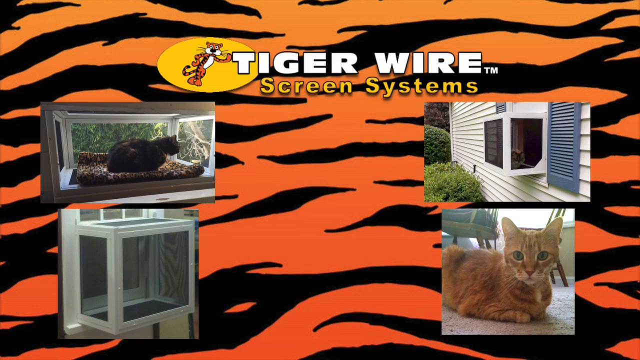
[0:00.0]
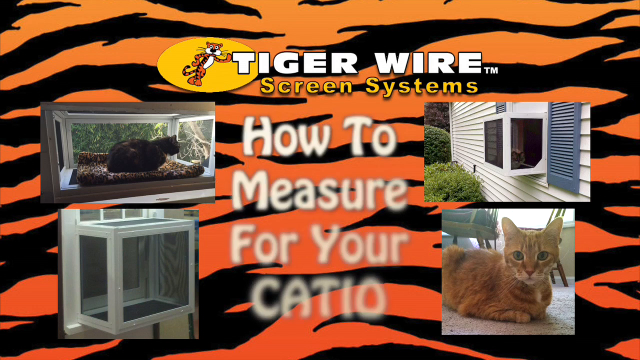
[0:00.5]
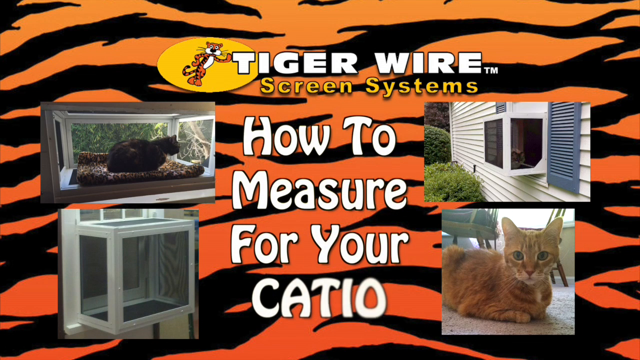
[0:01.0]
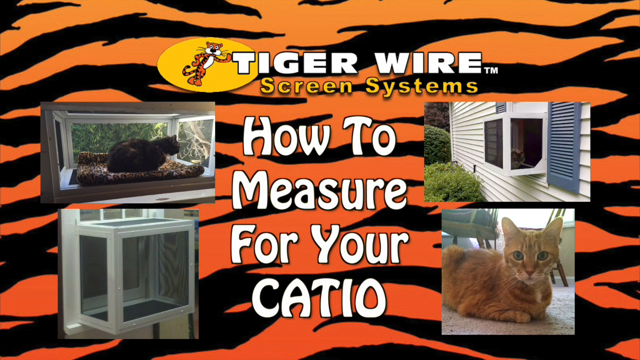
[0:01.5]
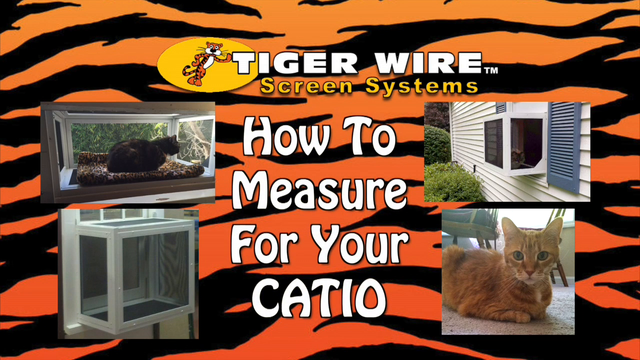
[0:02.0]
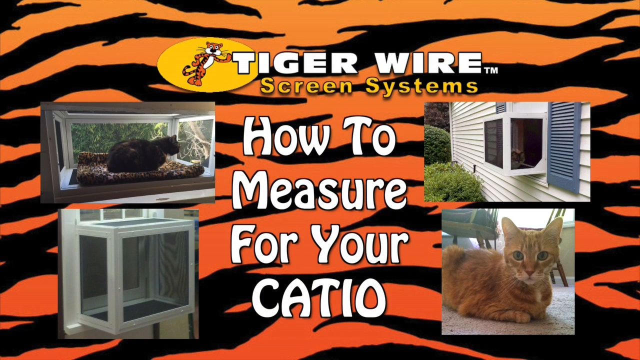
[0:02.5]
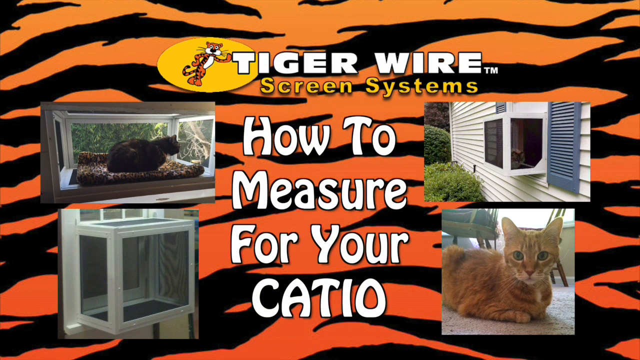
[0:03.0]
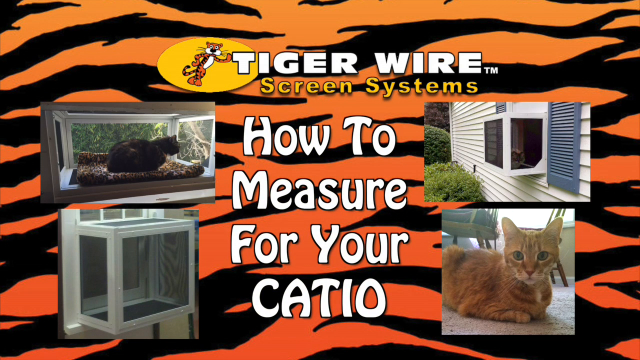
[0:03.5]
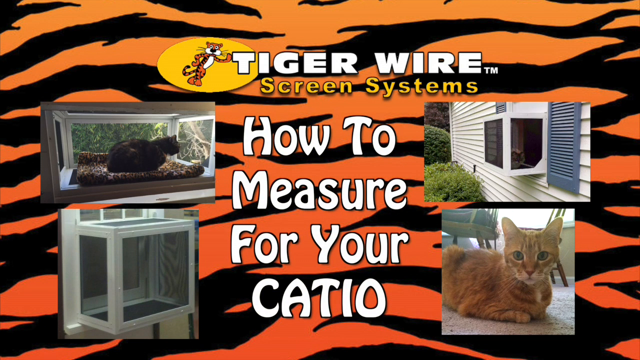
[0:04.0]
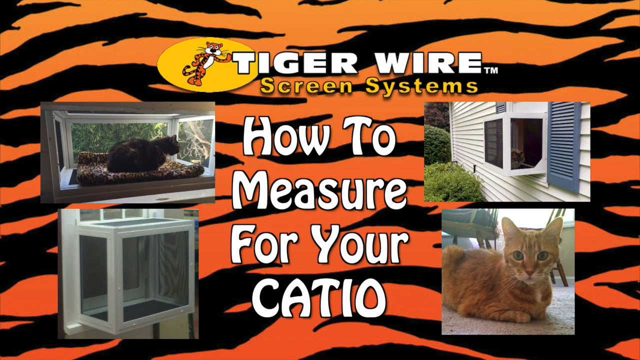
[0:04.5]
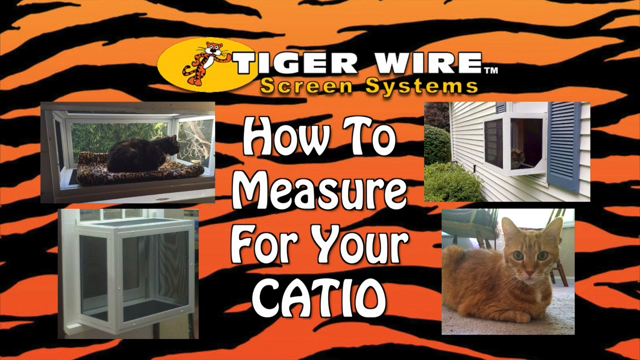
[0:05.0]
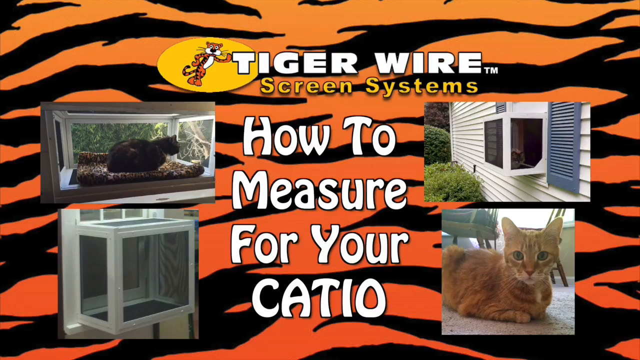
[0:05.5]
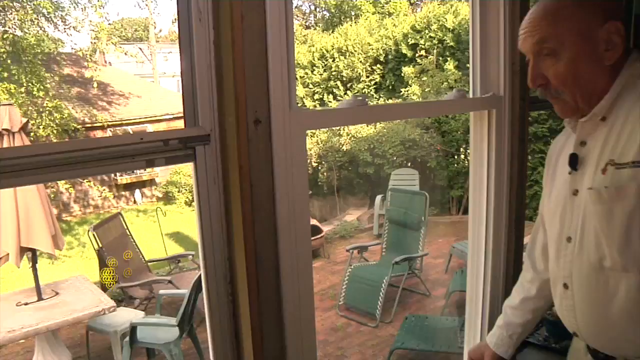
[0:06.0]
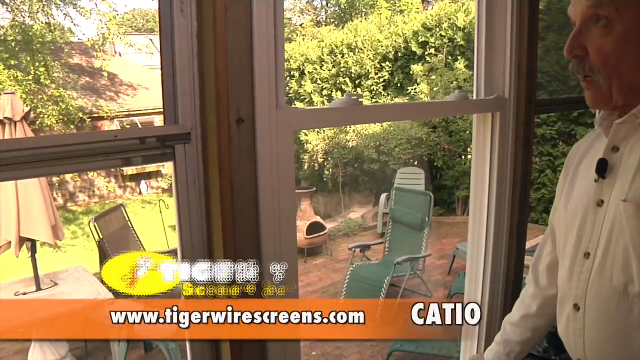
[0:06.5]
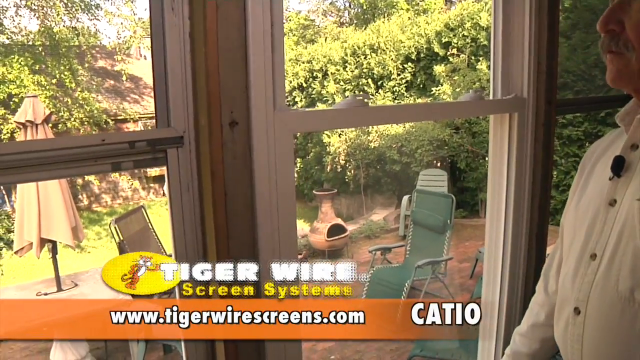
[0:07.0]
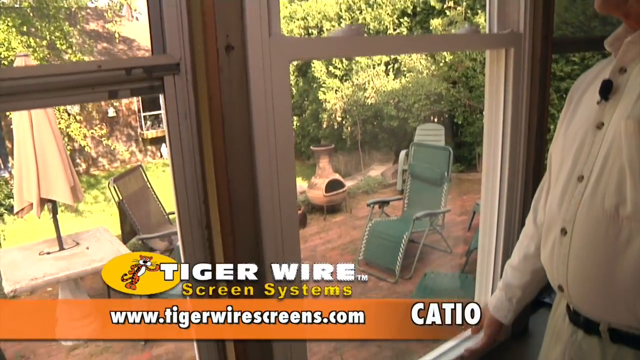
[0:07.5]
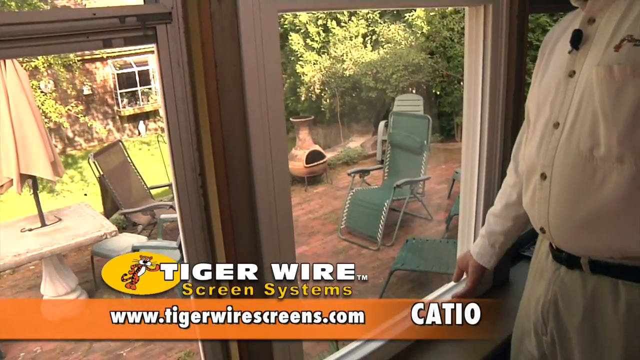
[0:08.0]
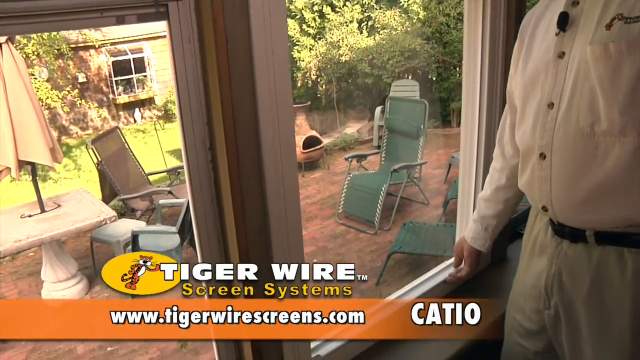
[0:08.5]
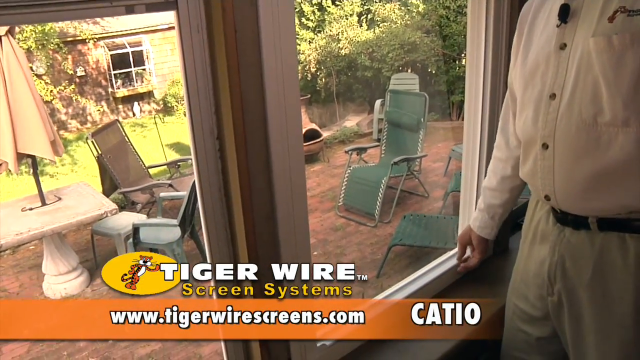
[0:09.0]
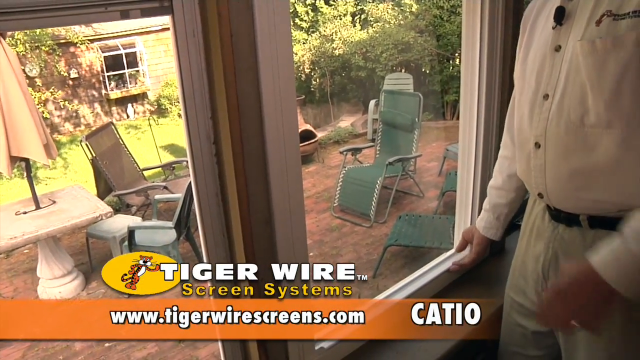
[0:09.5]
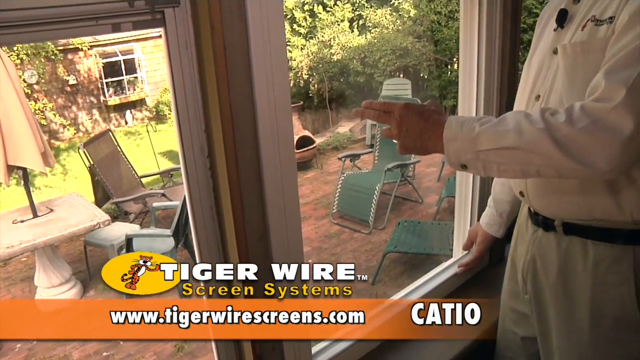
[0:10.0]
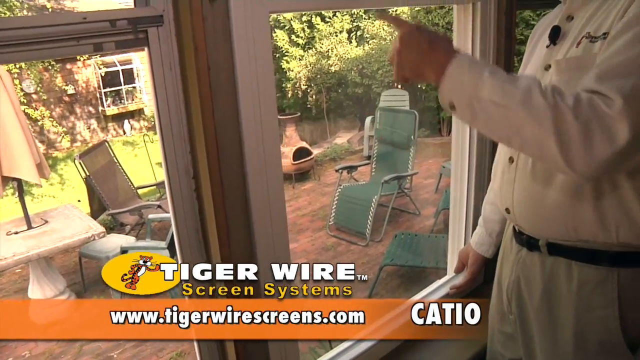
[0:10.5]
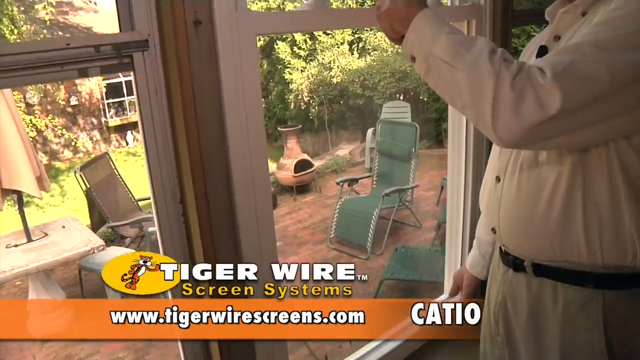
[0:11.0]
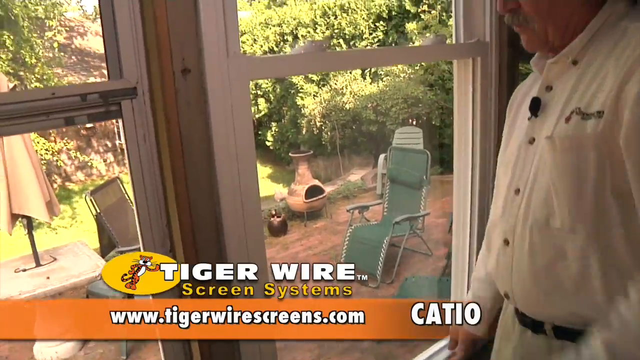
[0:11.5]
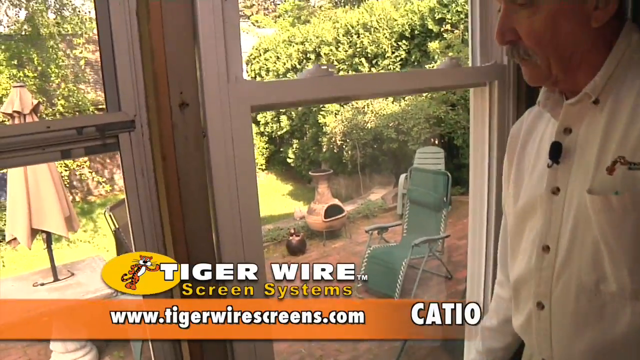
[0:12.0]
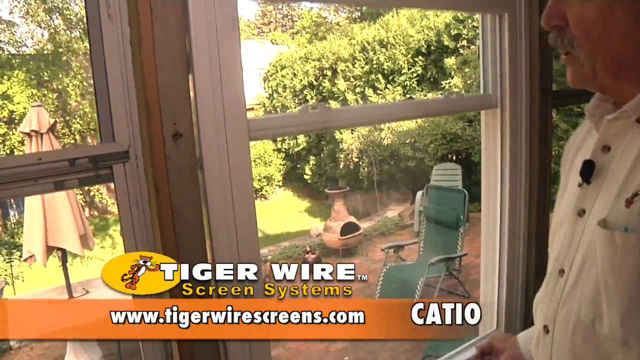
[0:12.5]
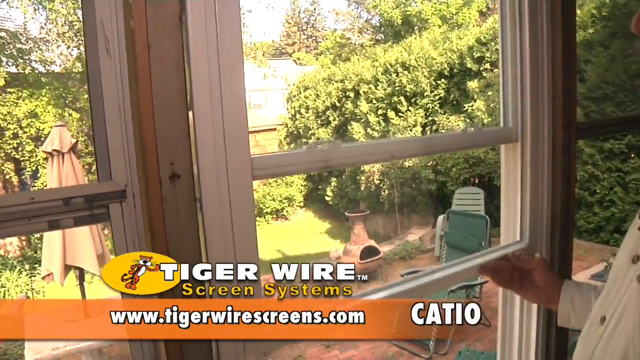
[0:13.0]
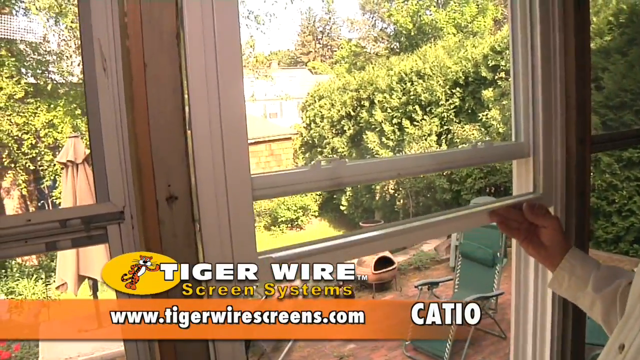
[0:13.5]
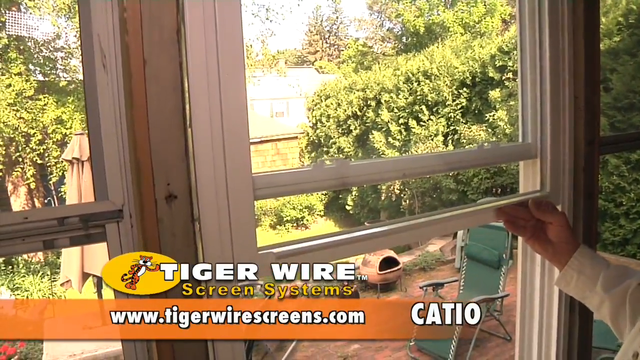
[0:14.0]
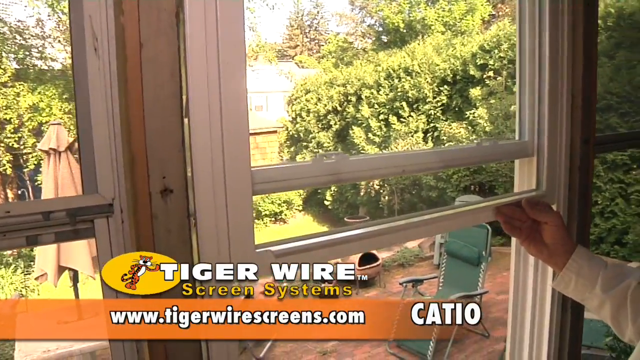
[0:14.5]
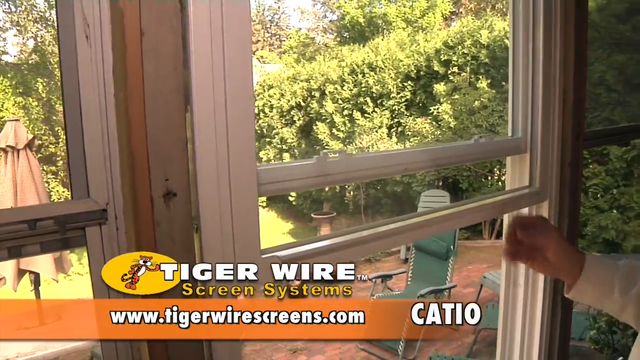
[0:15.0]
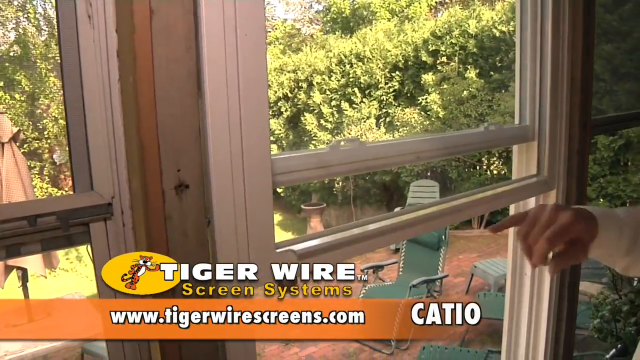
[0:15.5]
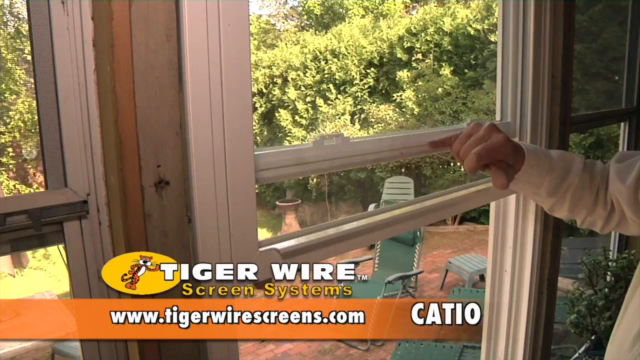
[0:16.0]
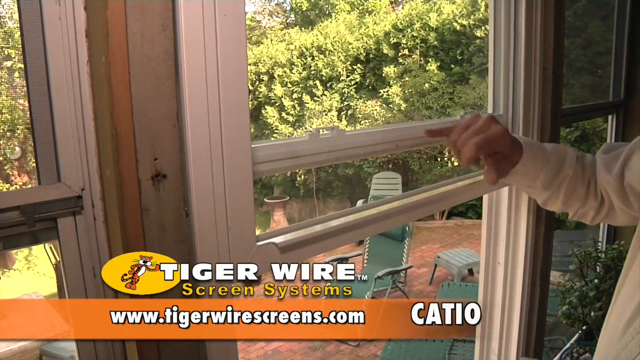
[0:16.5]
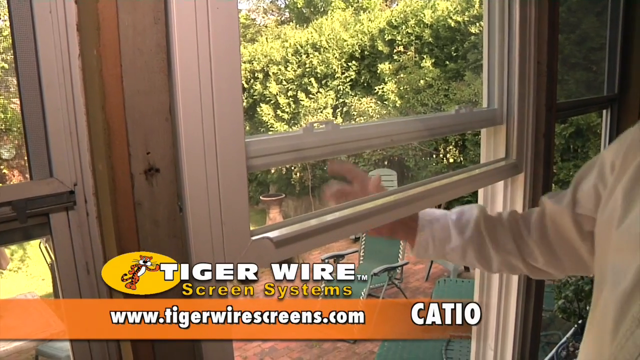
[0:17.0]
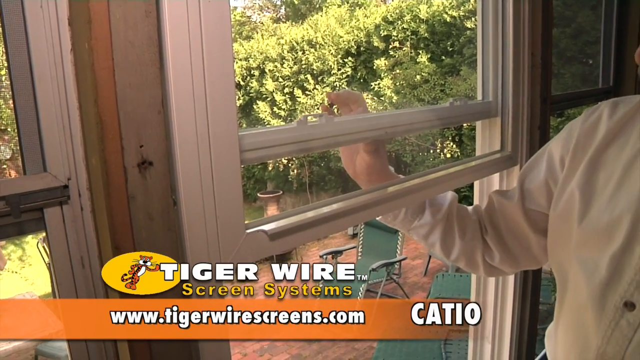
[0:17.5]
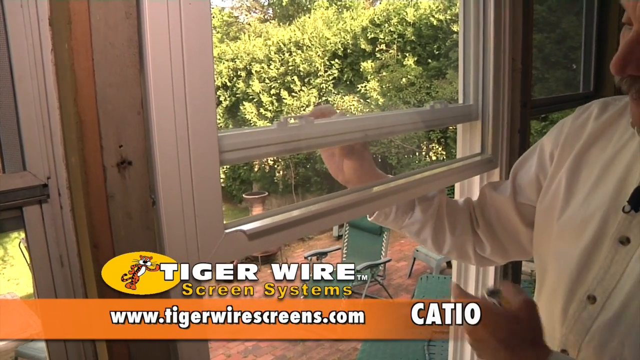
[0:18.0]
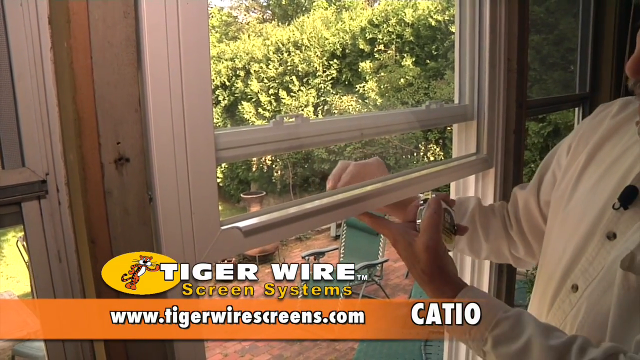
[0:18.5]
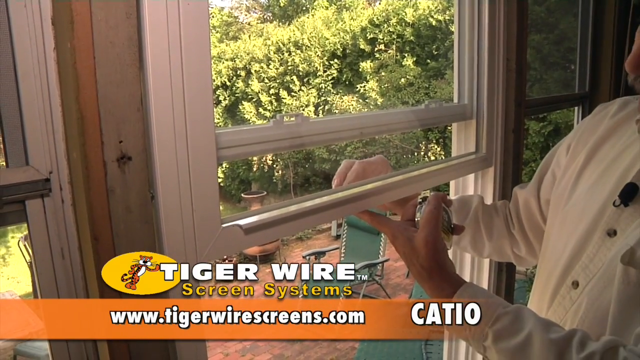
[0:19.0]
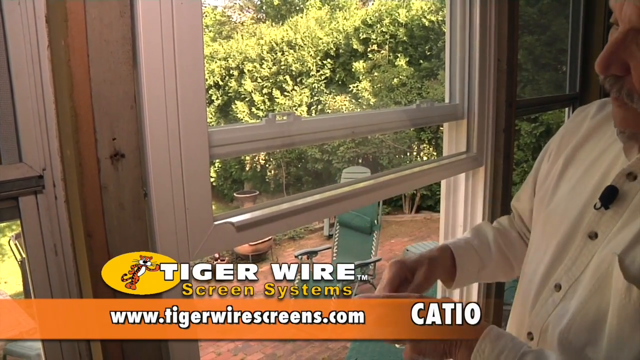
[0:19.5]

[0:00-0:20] The video opens with an advertisement for TigerWire screen systems. The background looks like tiger stripes, and the text says "how to measure your Catio."